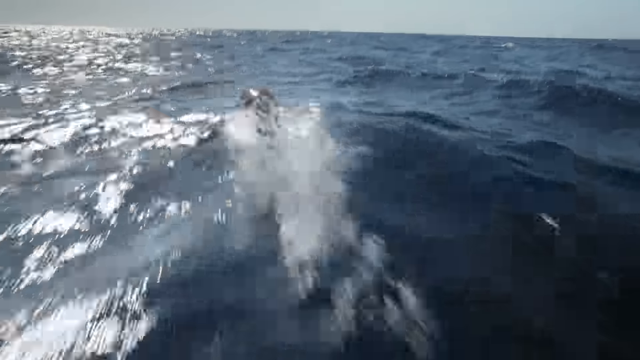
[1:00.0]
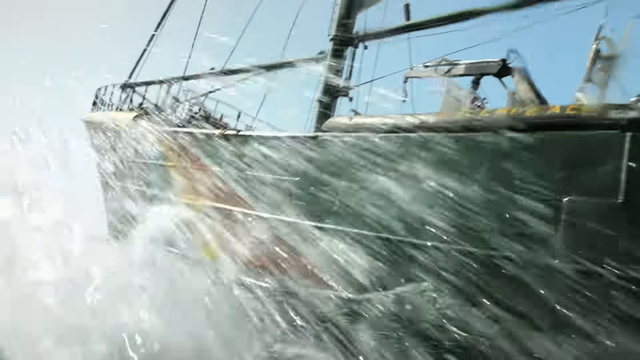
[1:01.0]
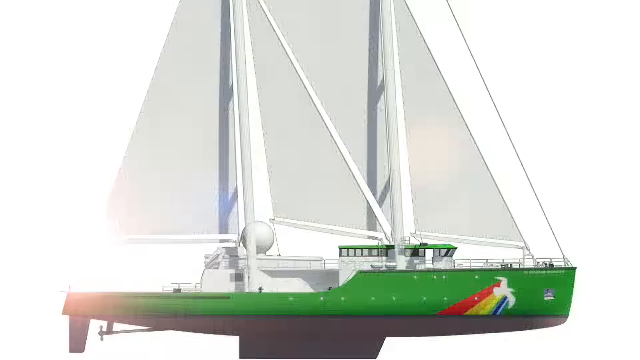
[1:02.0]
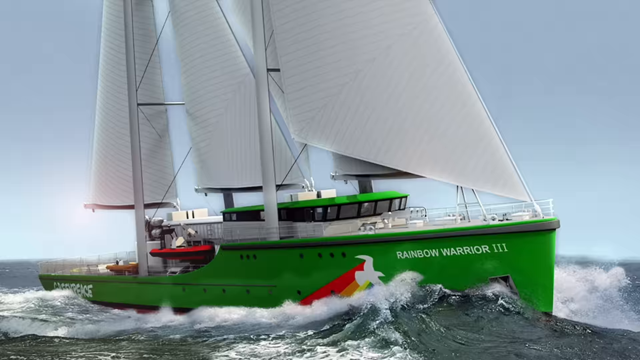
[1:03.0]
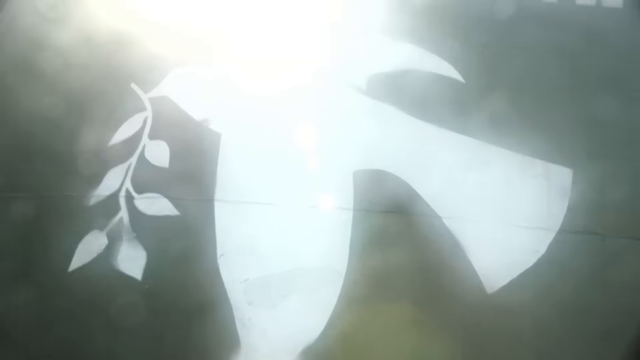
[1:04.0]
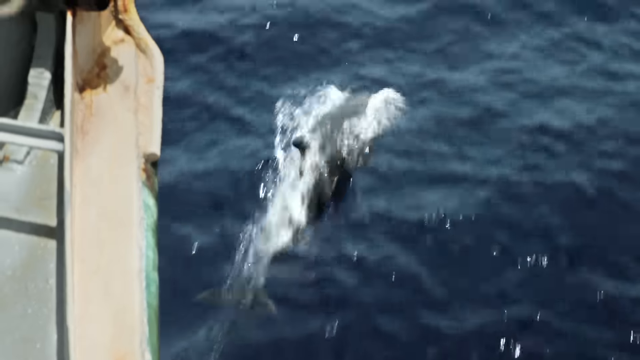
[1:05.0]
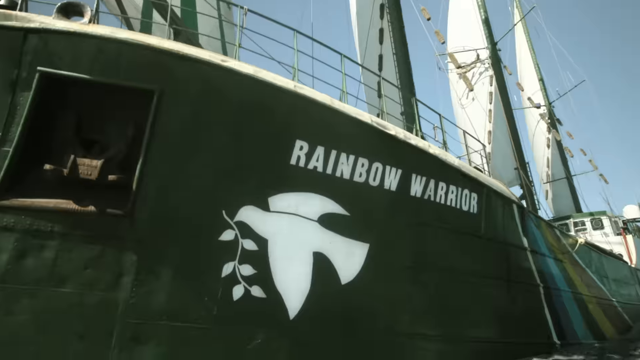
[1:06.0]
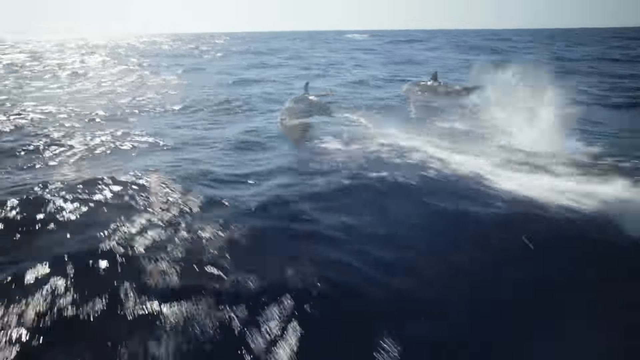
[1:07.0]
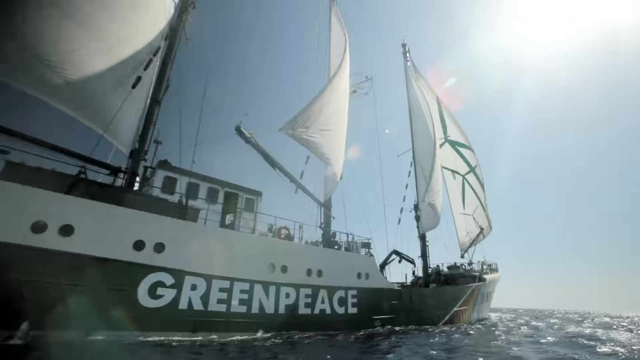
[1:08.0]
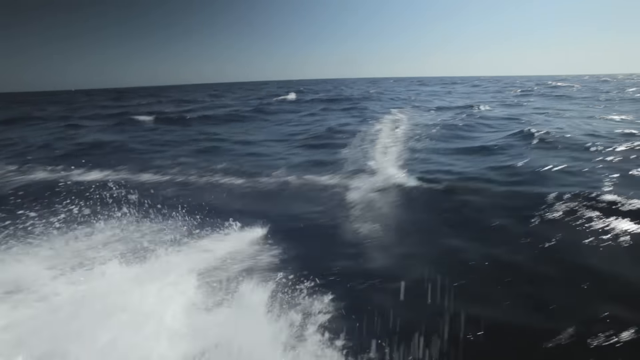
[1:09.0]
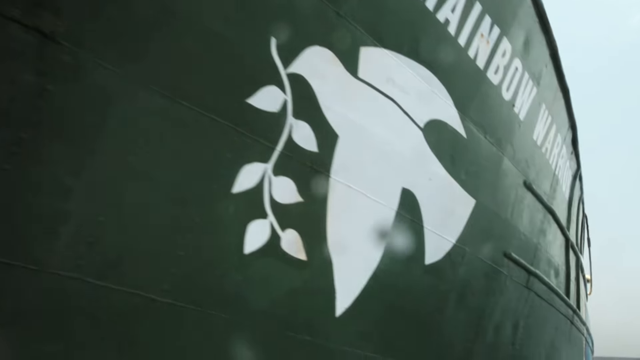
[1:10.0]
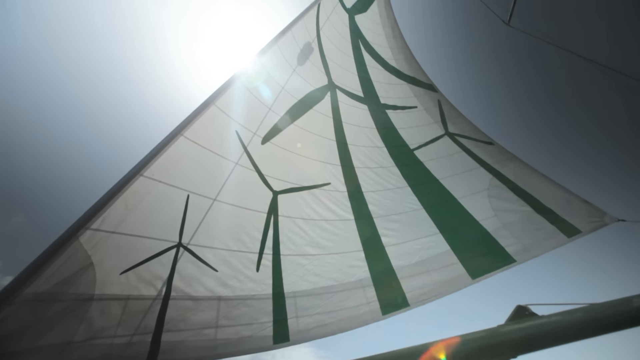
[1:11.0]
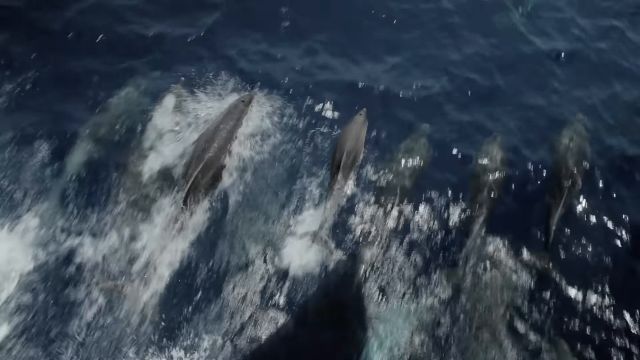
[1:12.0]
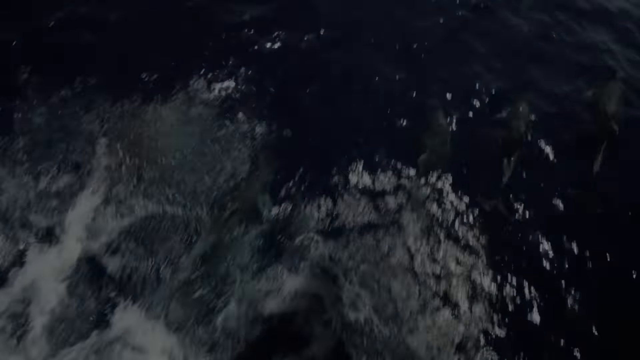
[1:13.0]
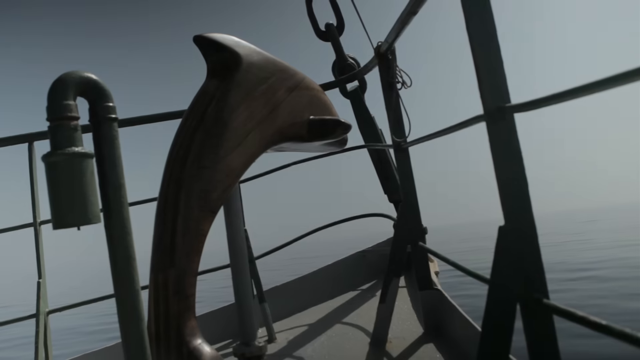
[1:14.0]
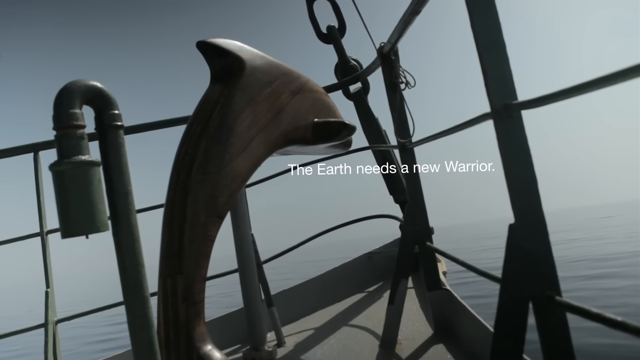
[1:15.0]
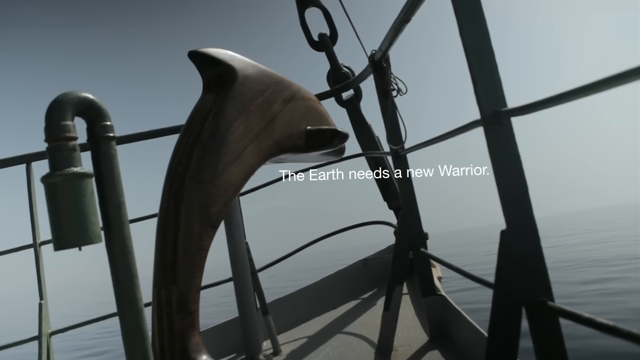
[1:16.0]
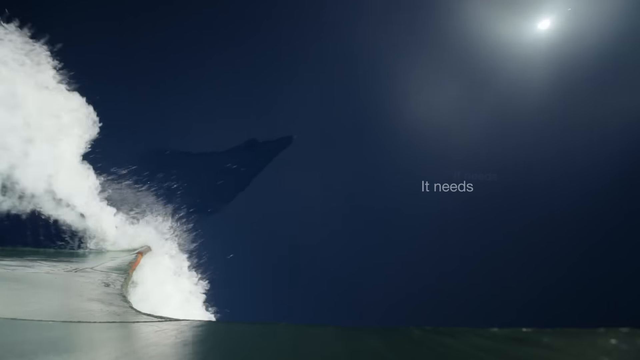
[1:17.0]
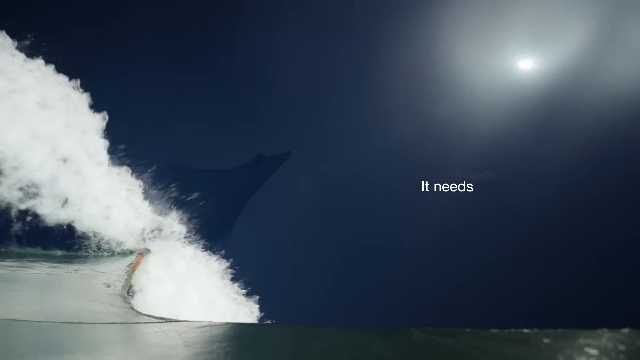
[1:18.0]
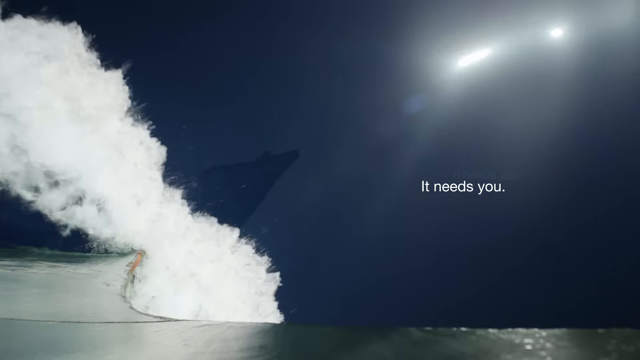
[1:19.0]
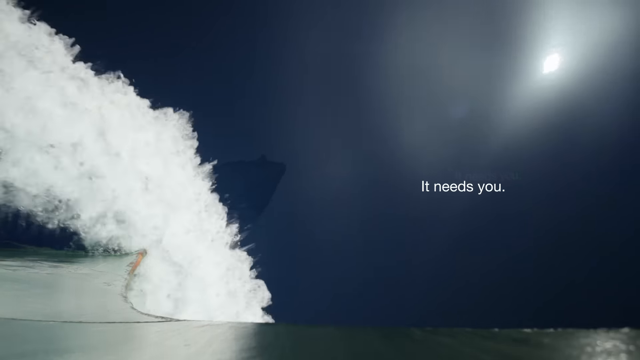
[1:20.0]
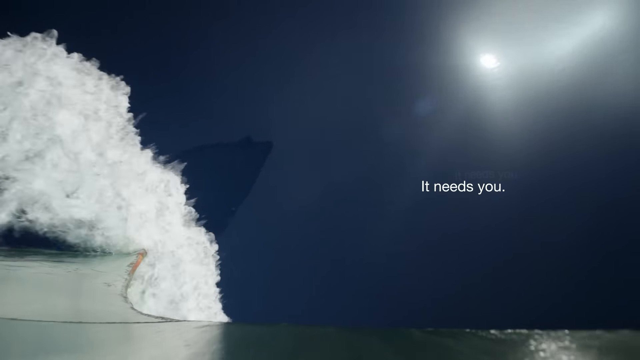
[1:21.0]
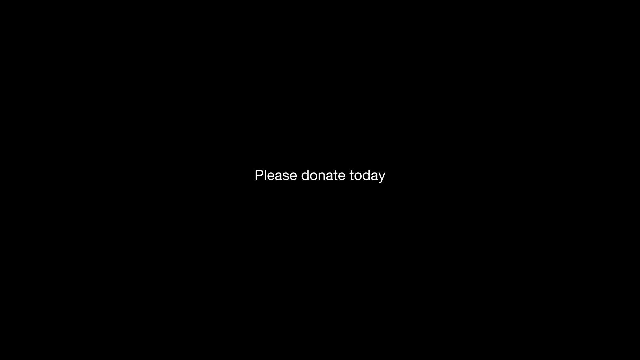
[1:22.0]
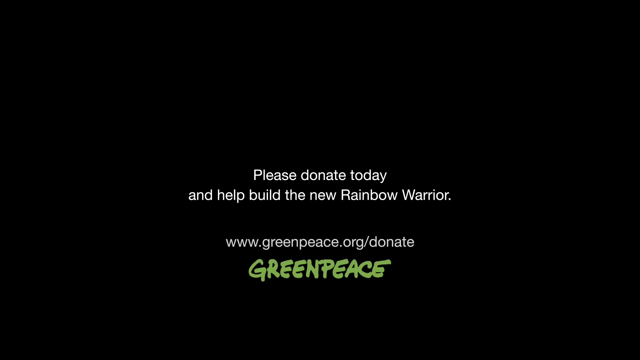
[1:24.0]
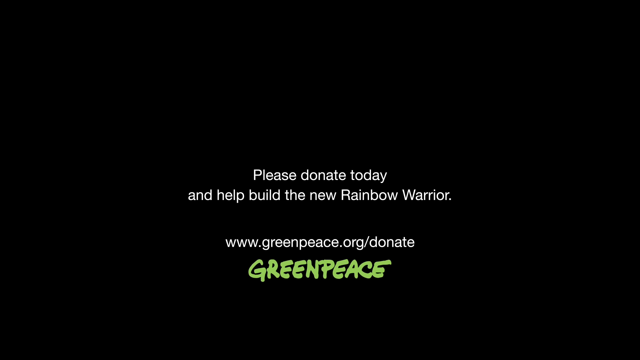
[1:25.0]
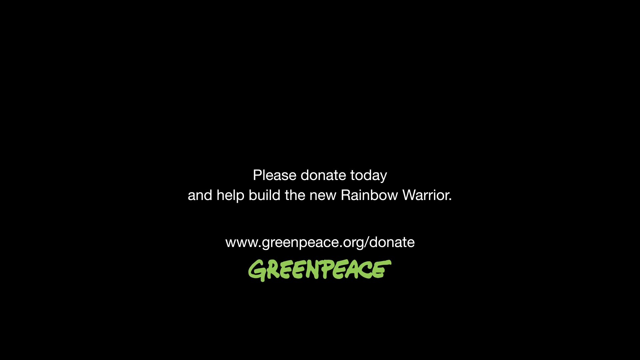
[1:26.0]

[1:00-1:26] Dolphins swim through the ocean and leap through the air. A Greenpeace boat called the Rainbow Warrior is shown, followed by a diagram of the interior and exterior of a Rainbow Warrior ship. More dolphins appear, apparently up to seven. At the end, text says "Earth needs a new warrior," "it needs you," and "please donate today," referring to the new Rainbow Warrior, which is apparently the ship in the diagram. The ship is green and white with large sails. The website greenpeace.org apparently appears for donations.